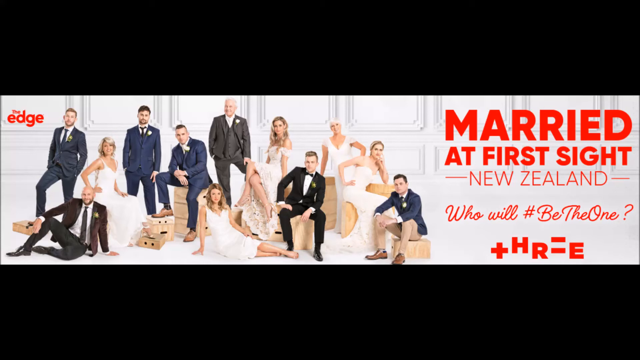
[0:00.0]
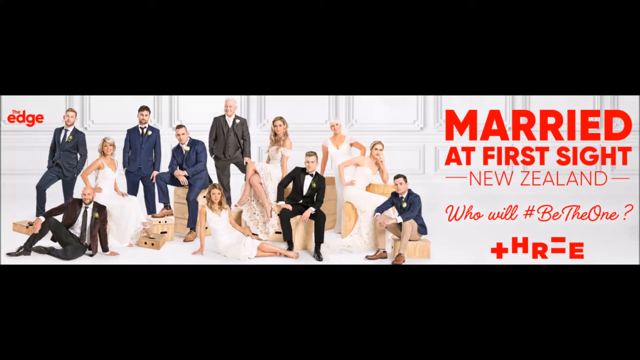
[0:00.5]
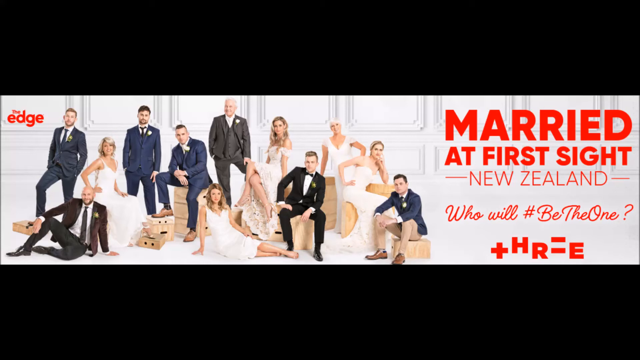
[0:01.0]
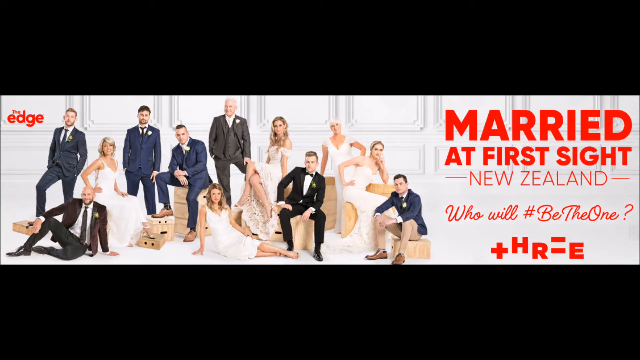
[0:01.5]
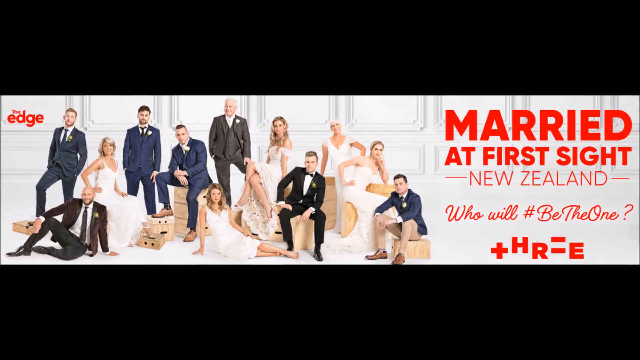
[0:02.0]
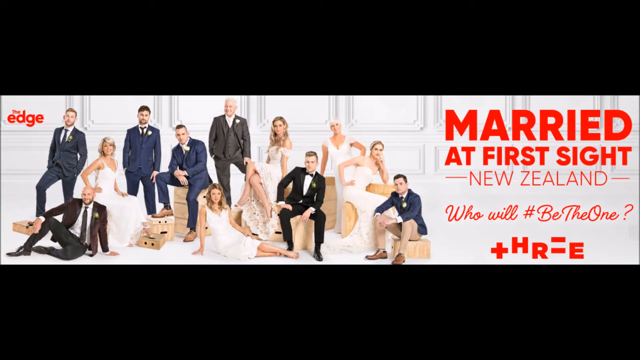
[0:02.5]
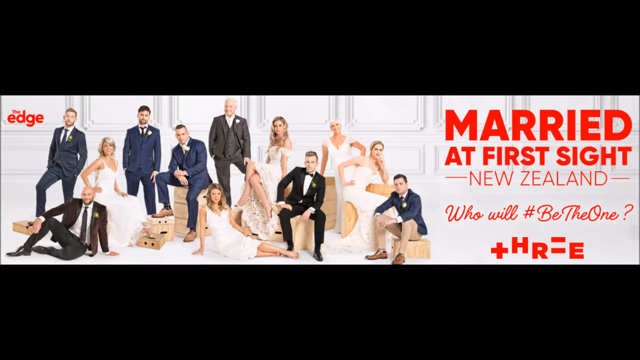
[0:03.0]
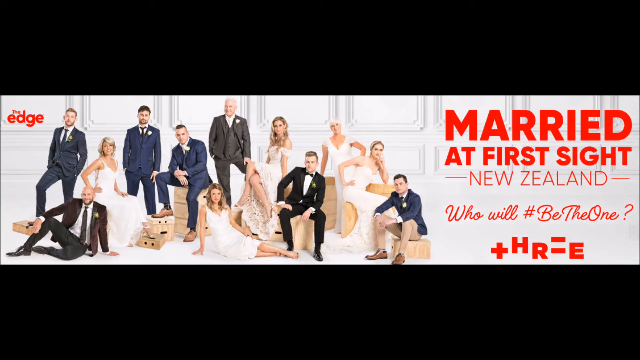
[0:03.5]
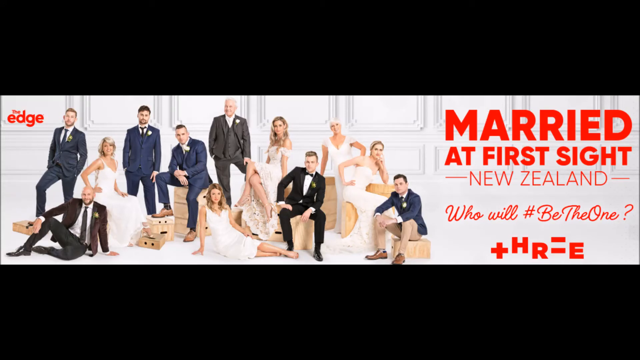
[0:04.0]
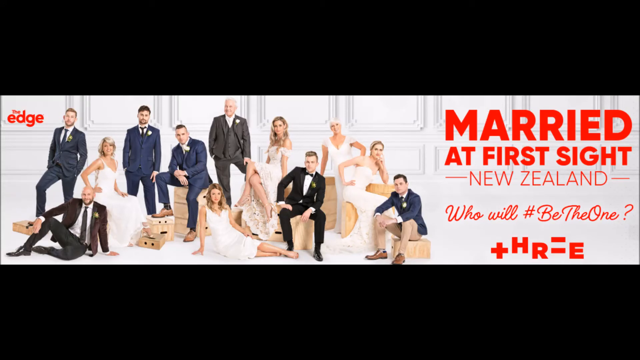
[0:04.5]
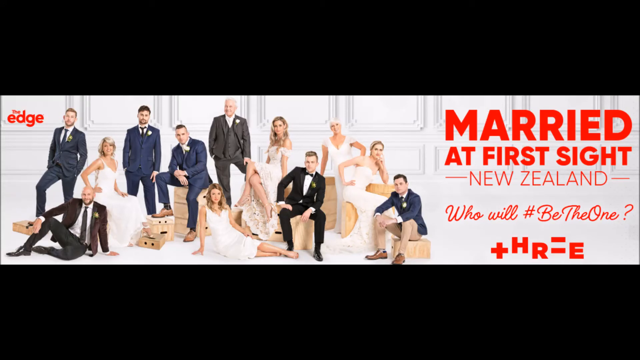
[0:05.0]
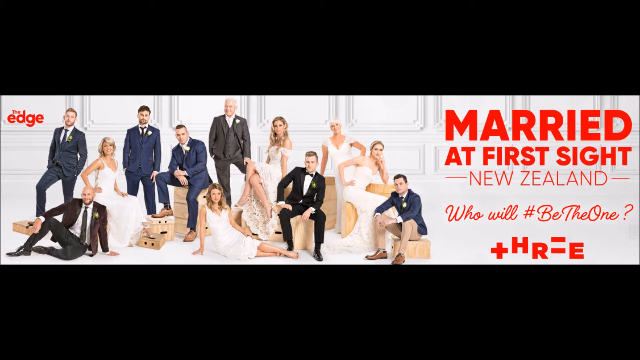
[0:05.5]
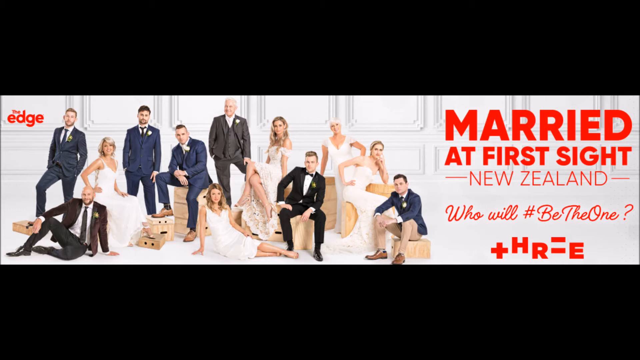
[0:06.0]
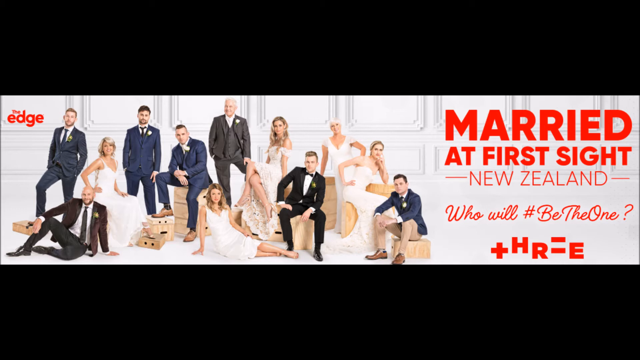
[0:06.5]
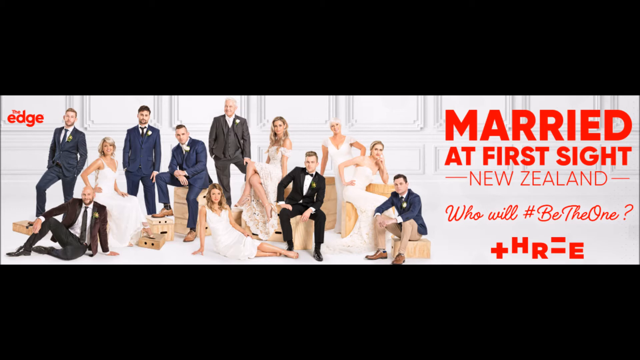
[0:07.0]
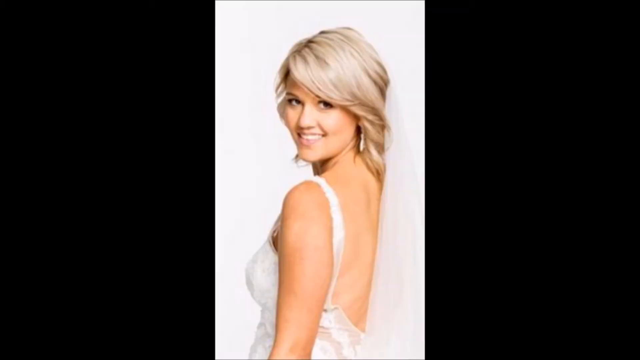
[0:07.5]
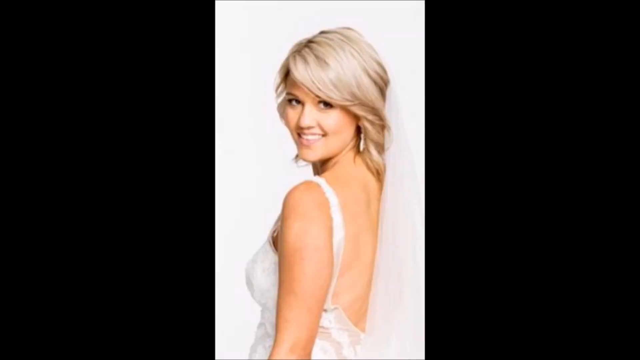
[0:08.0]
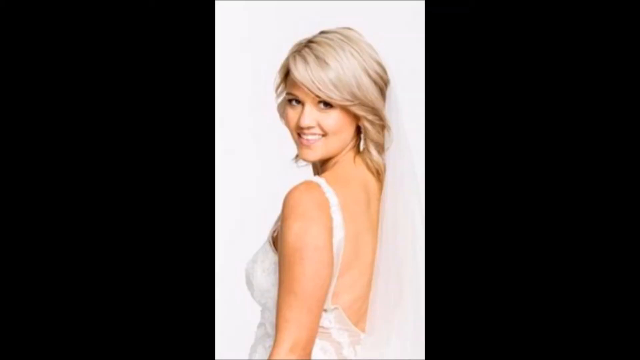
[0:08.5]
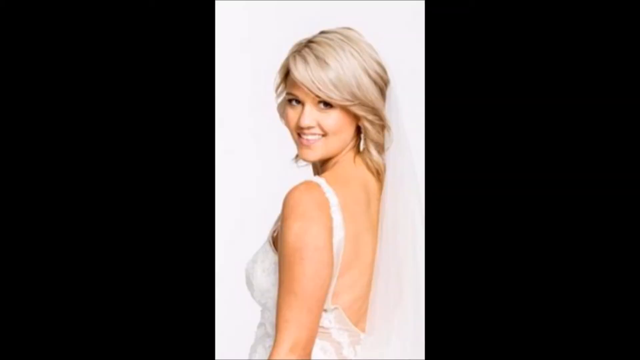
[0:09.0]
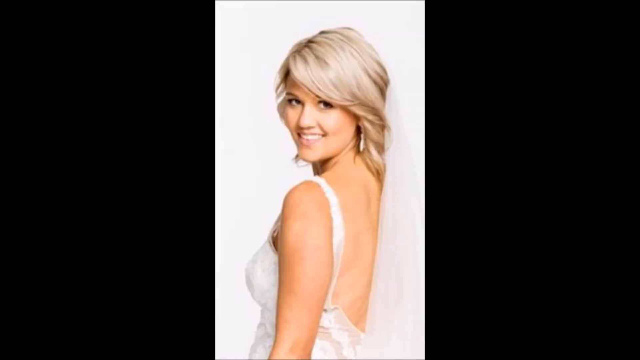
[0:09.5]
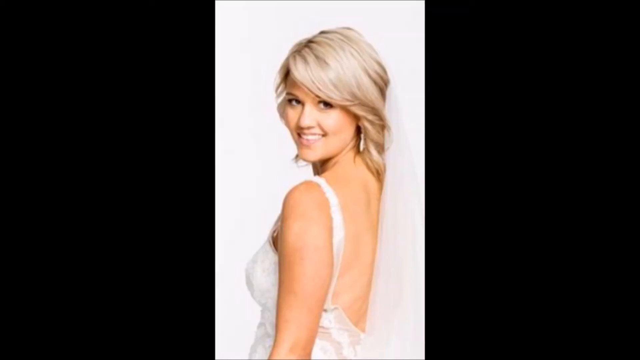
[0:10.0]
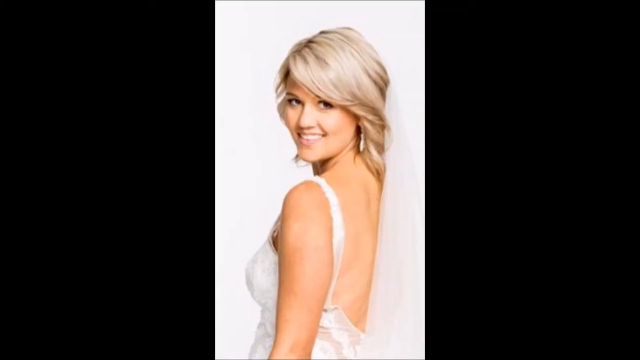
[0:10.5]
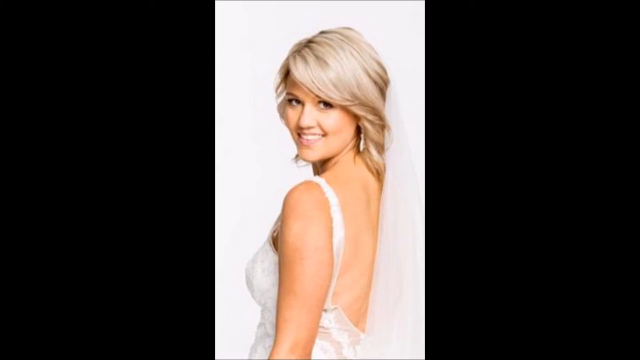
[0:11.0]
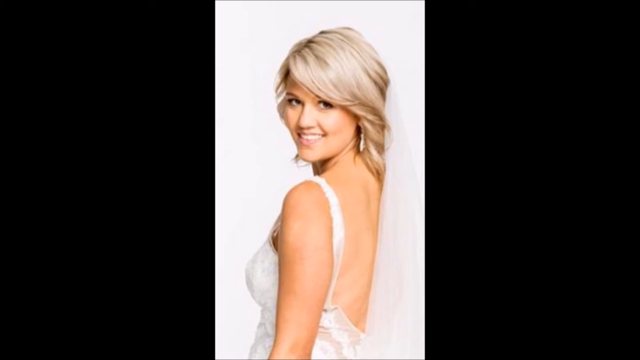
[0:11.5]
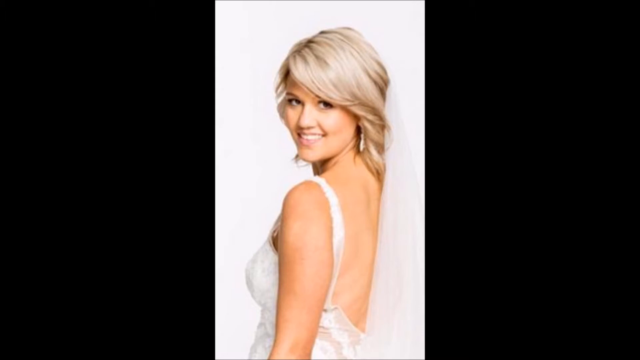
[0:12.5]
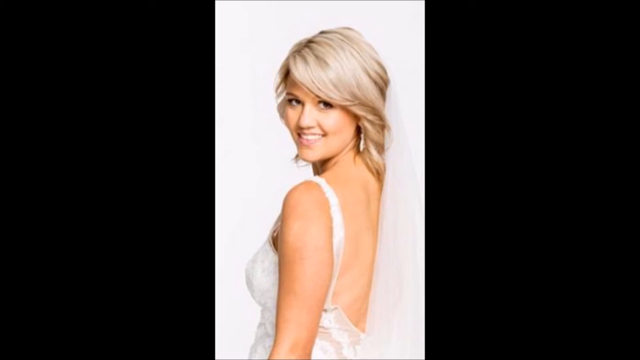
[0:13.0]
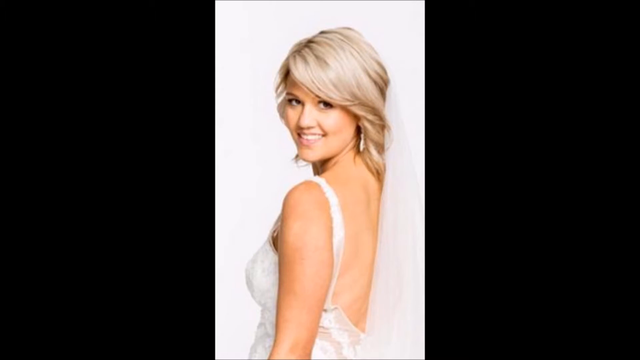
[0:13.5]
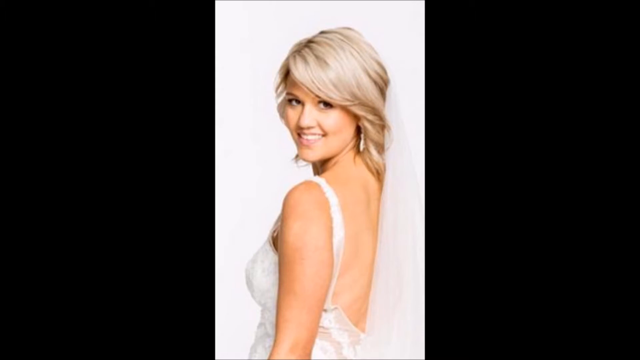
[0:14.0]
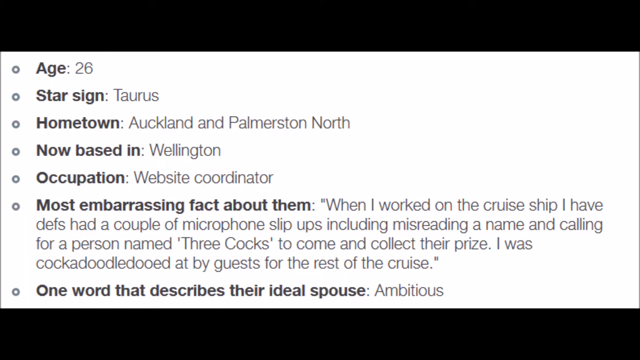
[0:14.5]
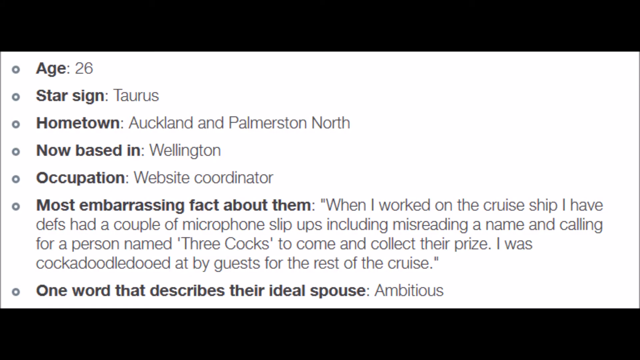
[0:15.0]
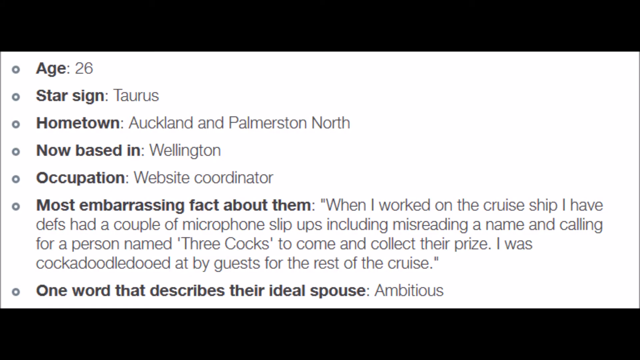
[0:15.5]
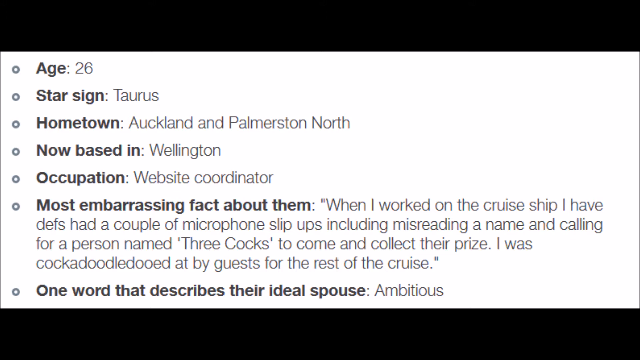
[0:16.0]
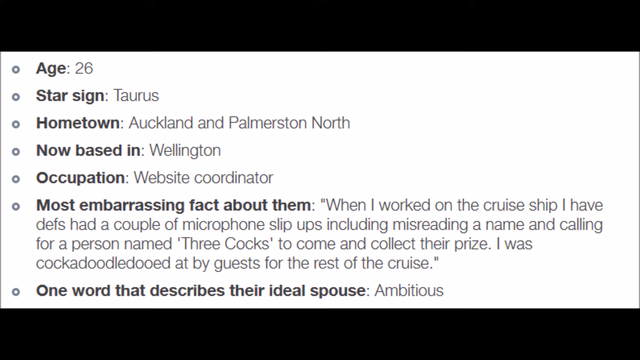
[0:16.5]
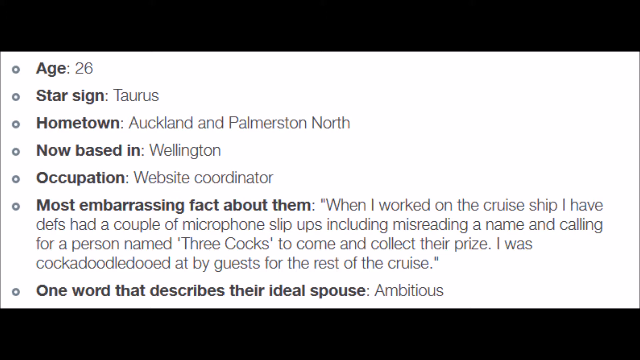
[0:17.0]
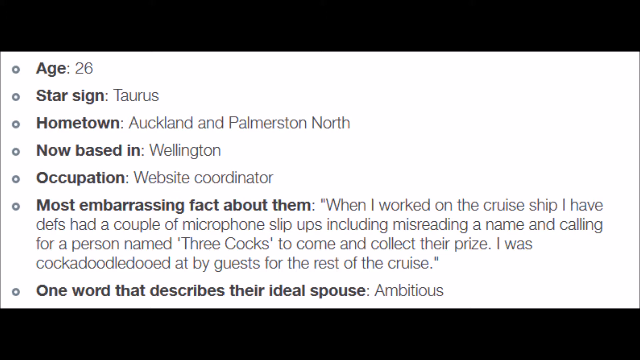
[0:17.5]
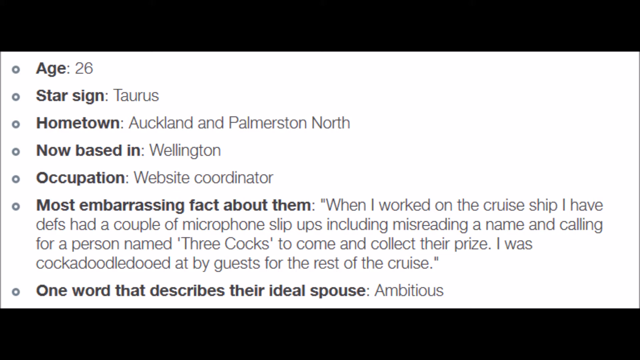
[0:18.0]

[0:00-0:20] The video opens on Married at First Sight New Zealand, showing a lot of people: half of them are men and the other half women. The women wear white dresses and the men wear suits in different colors. After a while, a picture of a woman with blonde hair in a blue dress appears. Text lists her details: "age 26"; hometown "Auckland and Palmerston North", "now based in Wellington"; occupation "website coordinator"; a most embarrassing fact, "When I worked on the cruise ship, I have had a couple of microphone slip ups, including misreading a name"; and the one word that describes their ideal spouse, "ambitious".